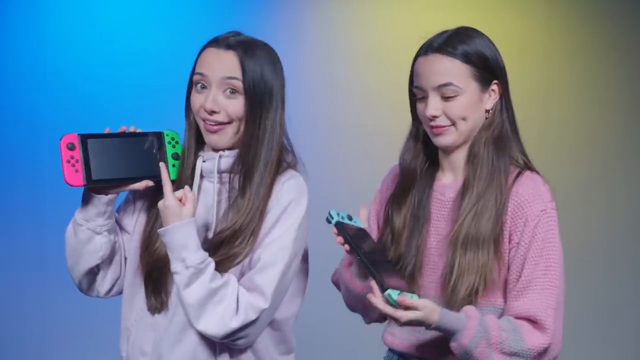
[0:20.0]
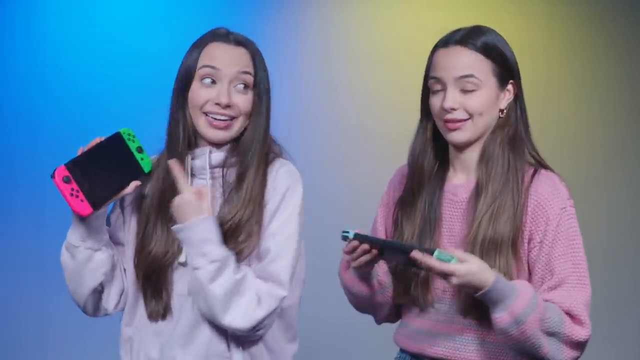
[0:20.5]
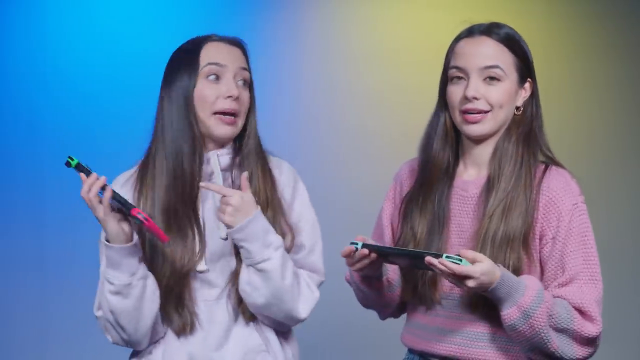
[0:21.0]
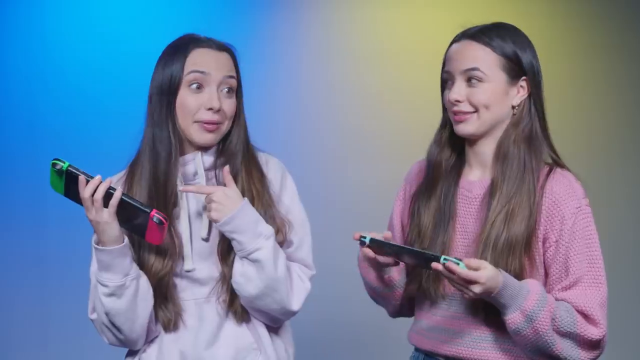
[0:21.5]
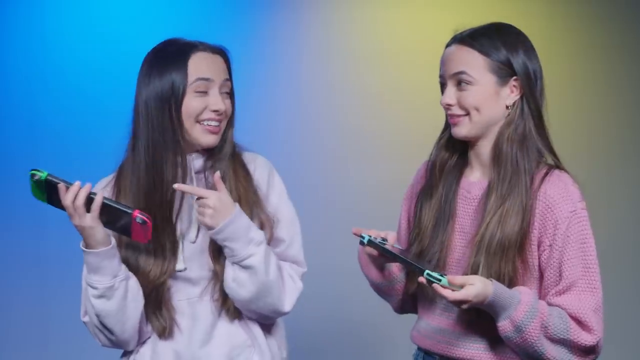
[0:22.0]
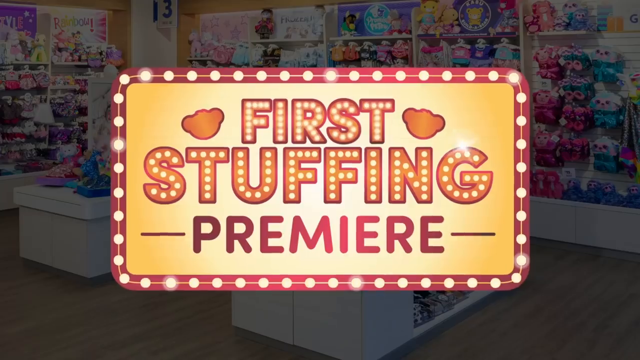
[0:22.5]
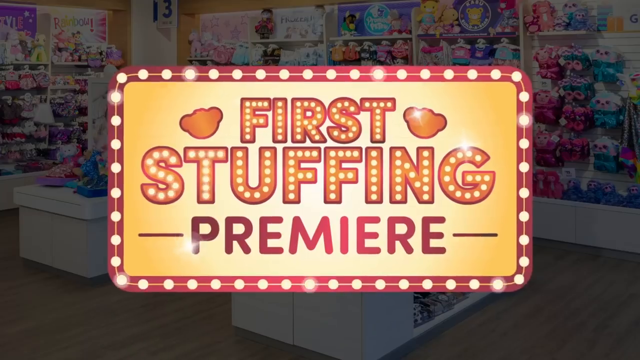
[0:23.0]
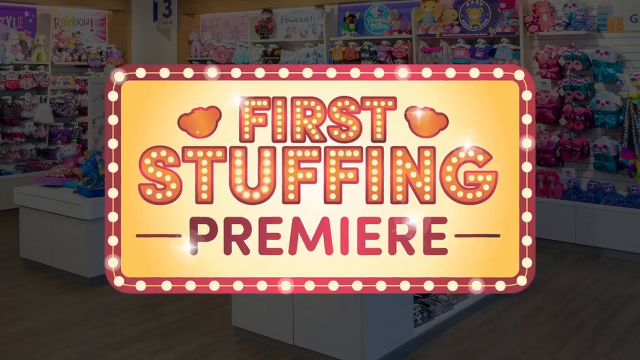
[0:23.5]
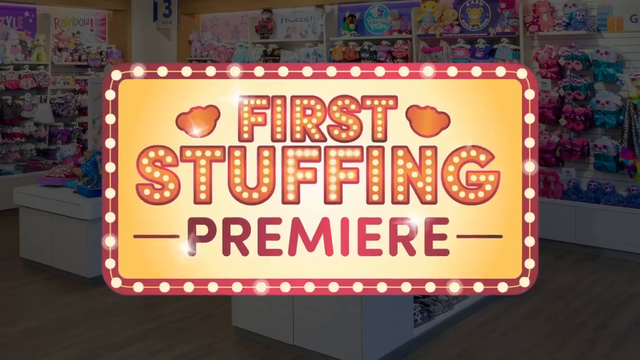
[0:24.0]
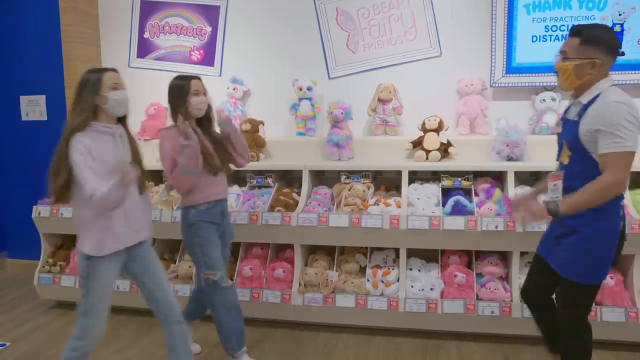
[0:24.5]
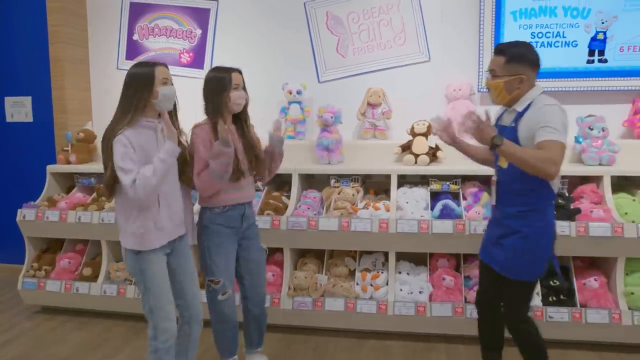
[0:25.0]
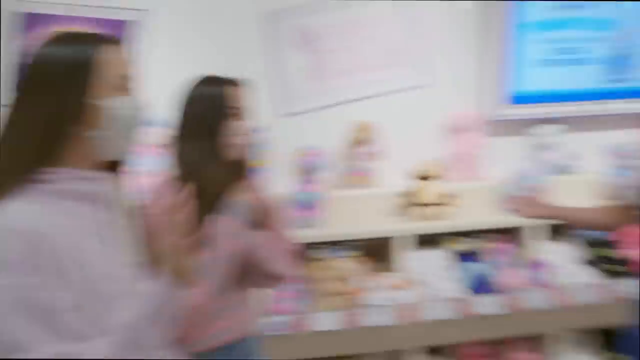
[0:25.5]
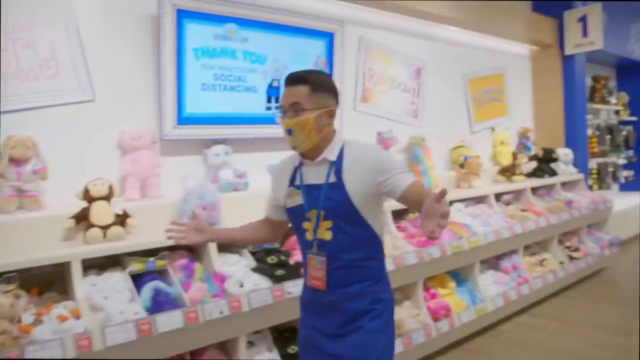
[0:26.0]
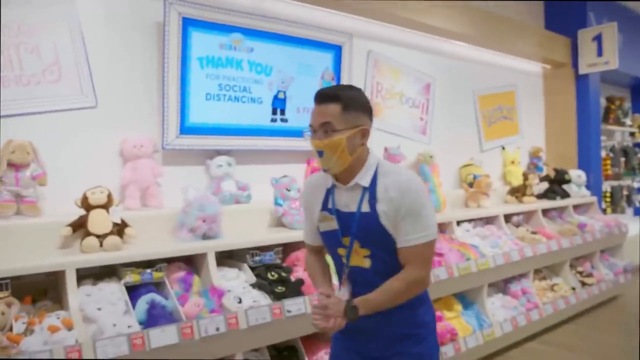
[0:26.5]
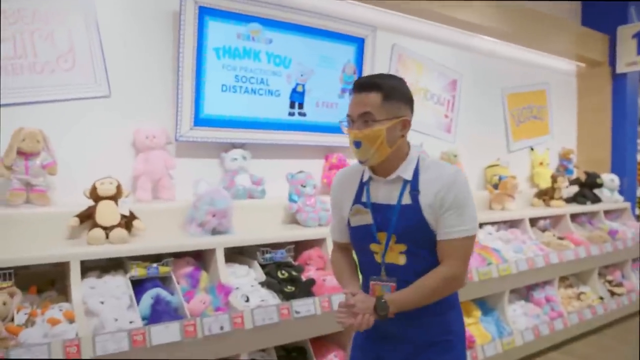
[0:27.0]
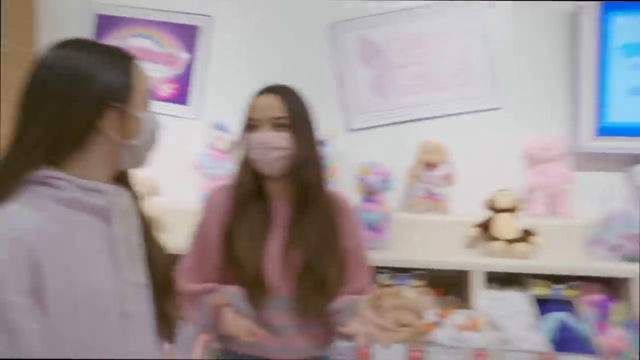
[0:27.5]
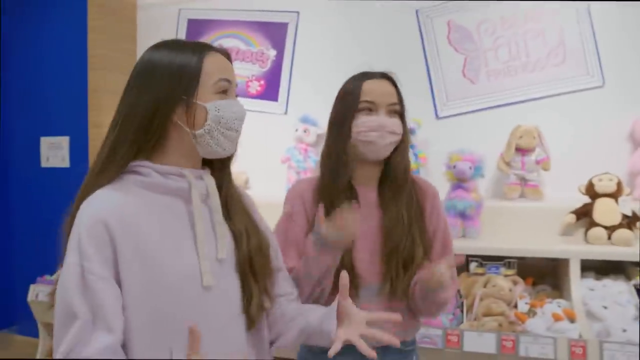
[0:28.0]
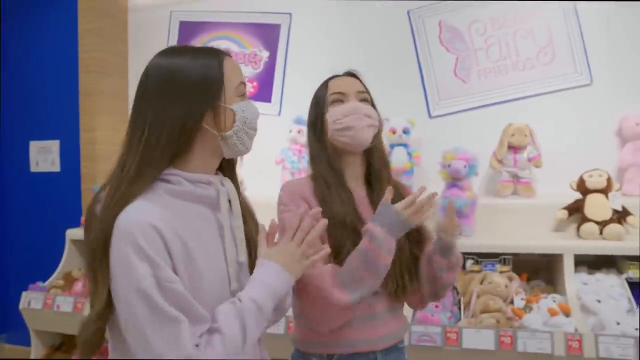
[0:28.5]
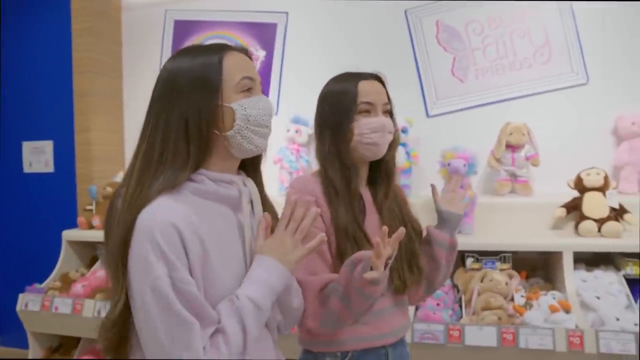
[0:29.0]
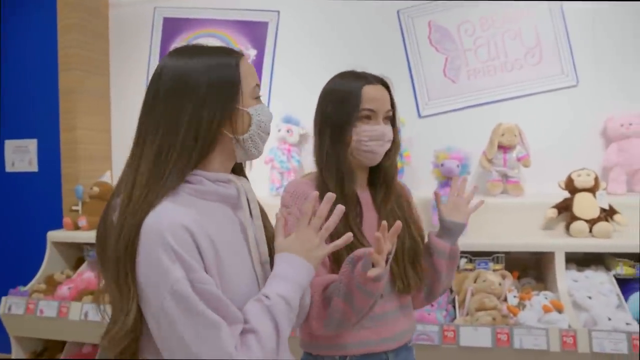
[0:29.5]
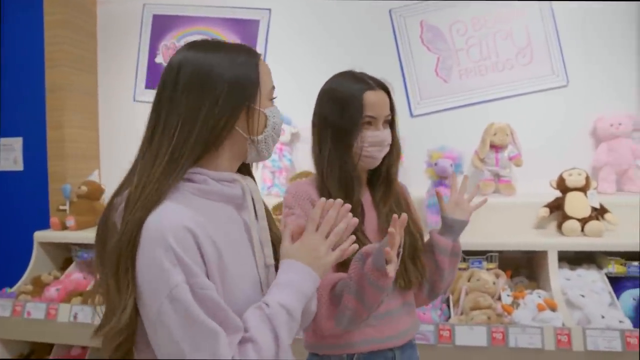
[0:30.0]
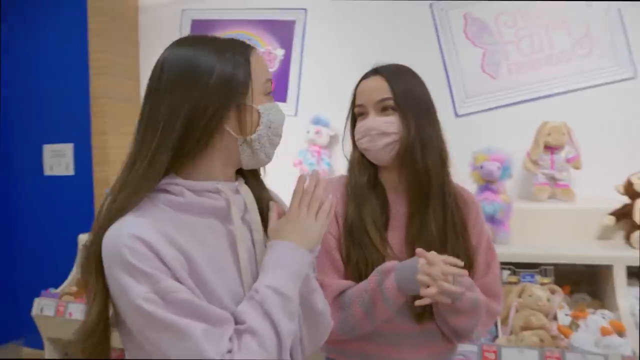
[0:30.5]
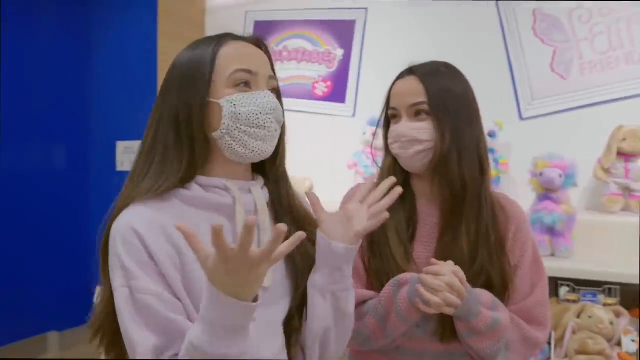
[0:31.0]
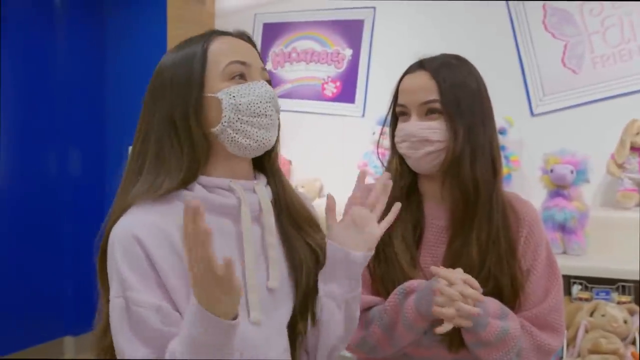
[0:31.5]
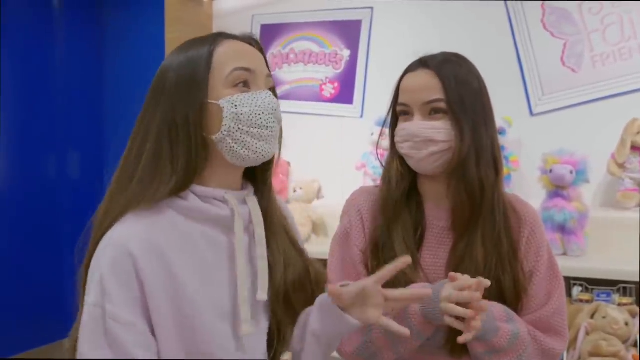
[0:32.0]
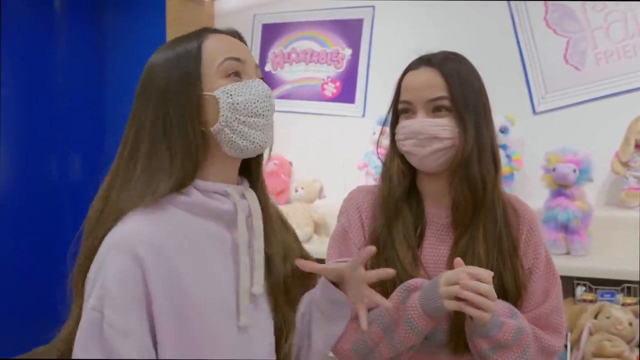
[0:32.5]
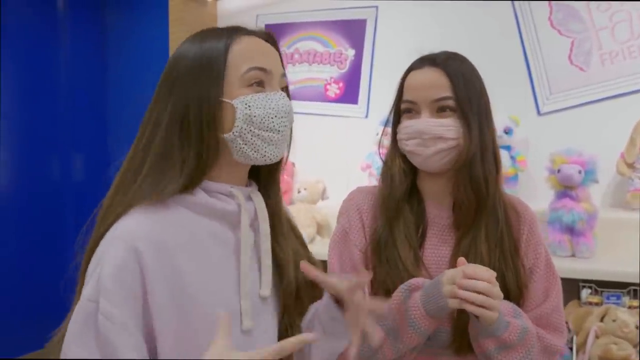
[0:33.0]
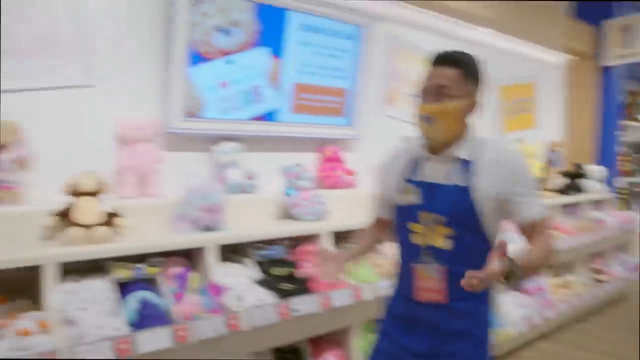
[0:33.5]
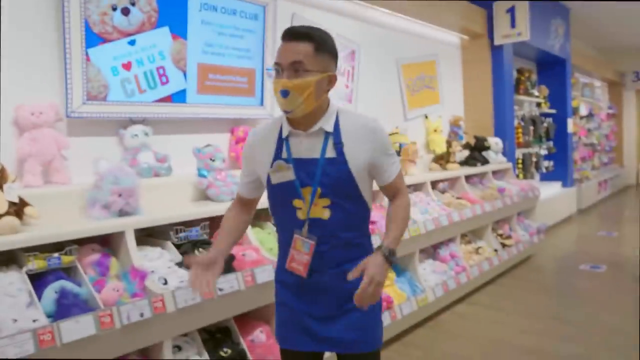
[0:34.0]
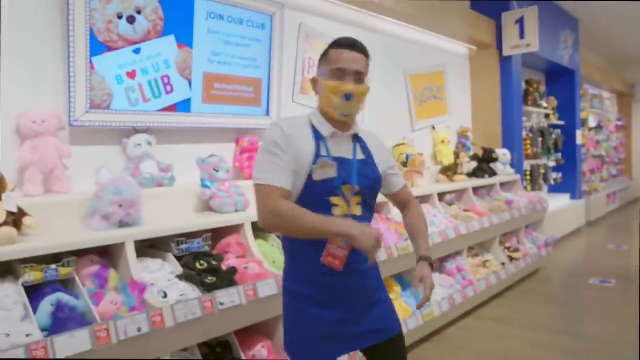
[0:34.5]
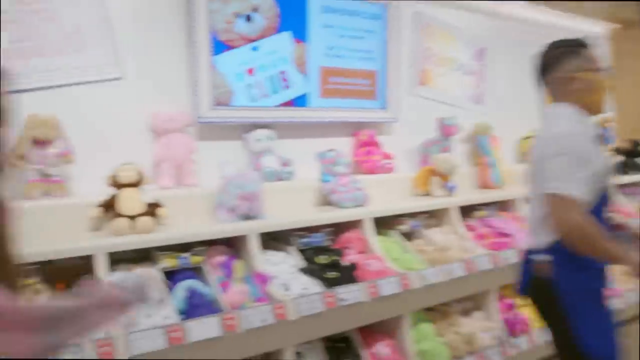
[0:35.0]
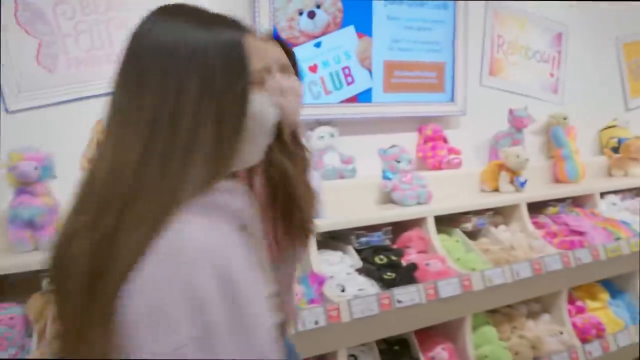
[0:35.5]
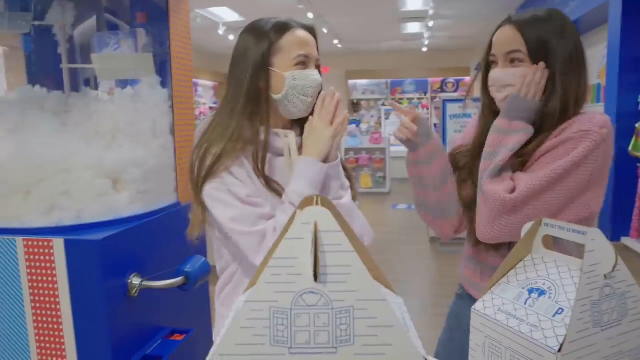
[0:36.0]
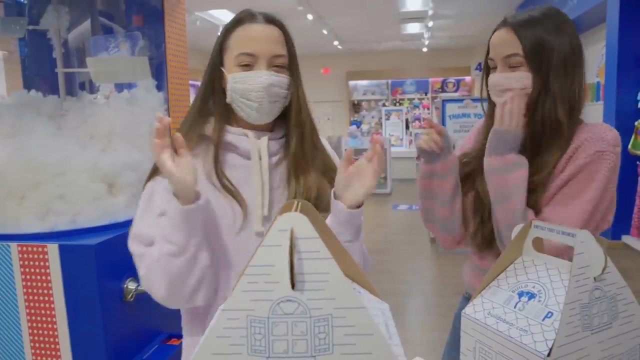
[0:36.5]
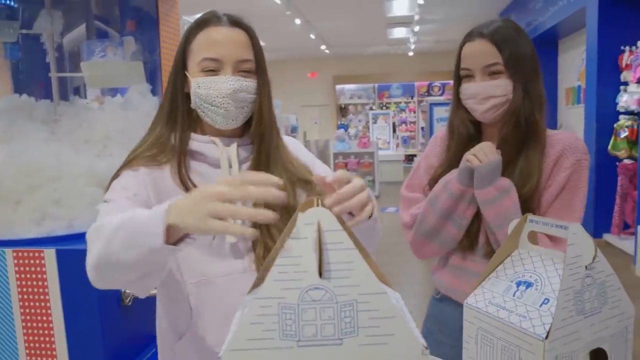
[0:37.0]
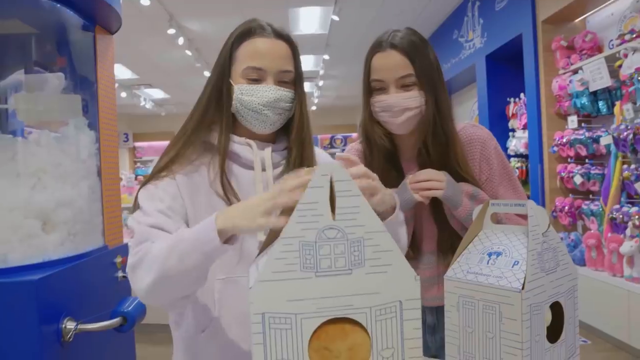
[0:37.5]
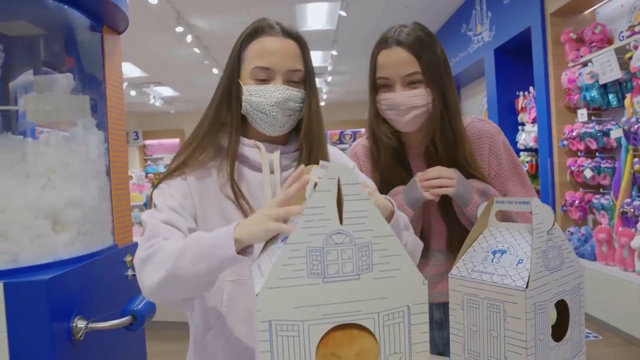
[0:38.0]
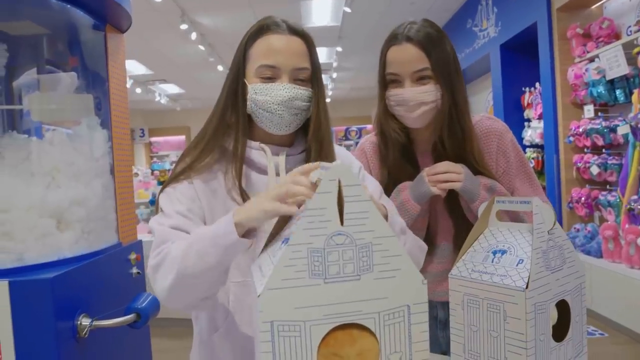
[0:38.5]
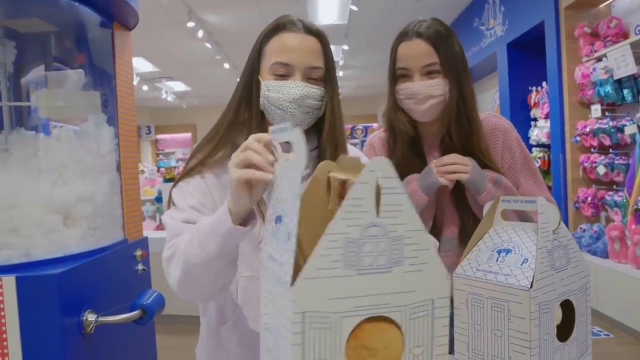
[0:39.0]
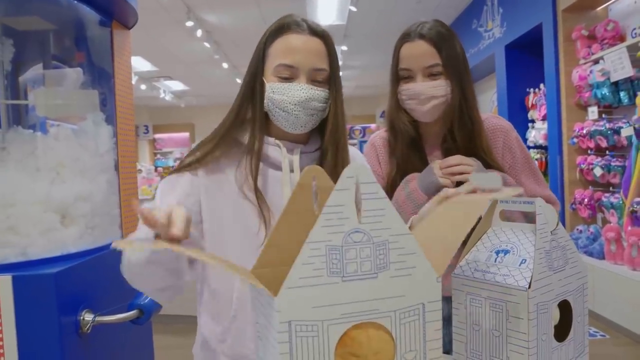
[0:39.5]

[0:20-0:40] The same two women start out holding the two gadgets, maybe gaming gadgets. Another person comes in, and an advertisement shows "fast-stuffing premium". A third person, a man wearing a mask, comes in to join them. All of them put masks on their faces and seem happy. The man tells them to follow him and takes them to a store full of dolls and teddy bears, a very well-decorated room. He then takes them to another store with a decoration that looks like curtains, and one of the women, wearing a white jumper, tries to open it.